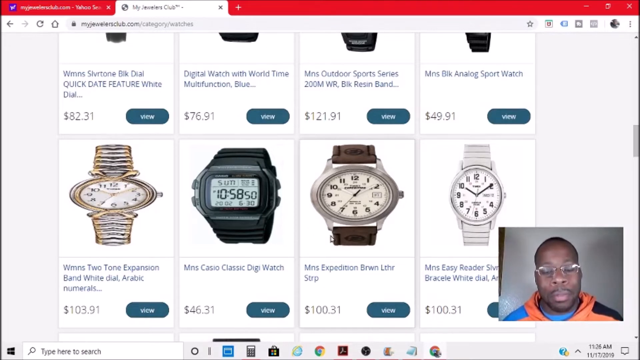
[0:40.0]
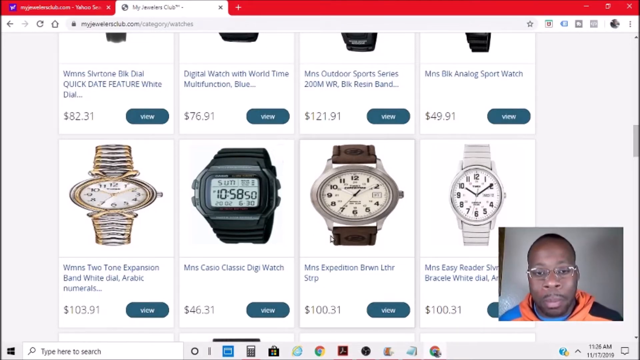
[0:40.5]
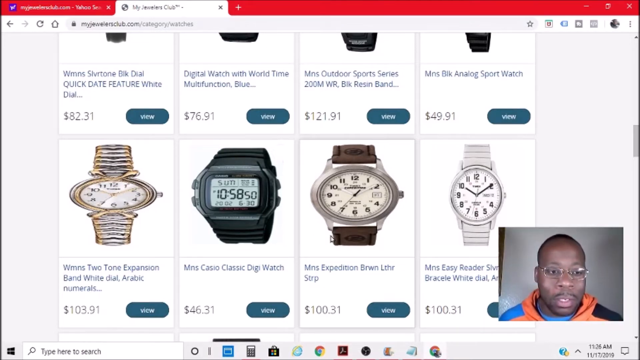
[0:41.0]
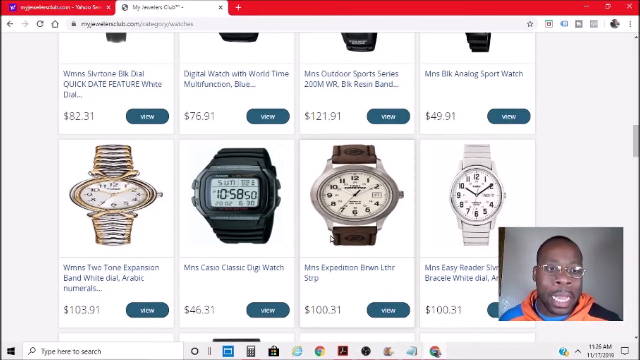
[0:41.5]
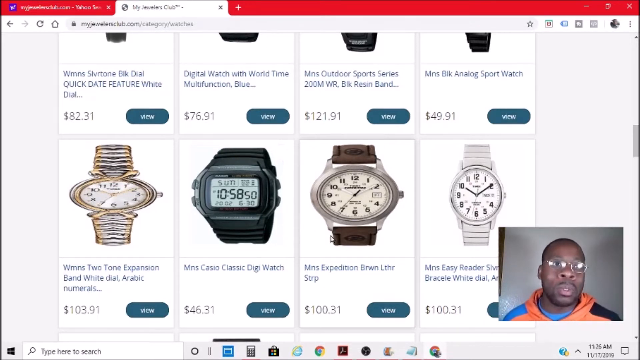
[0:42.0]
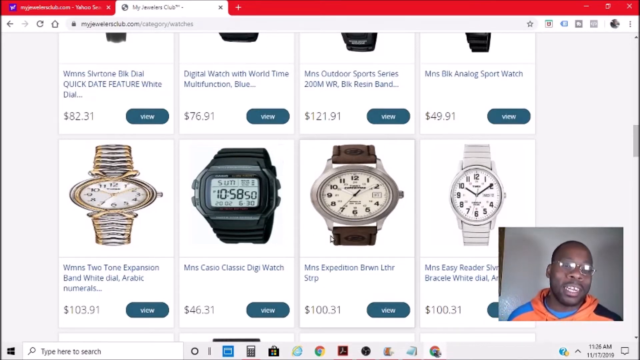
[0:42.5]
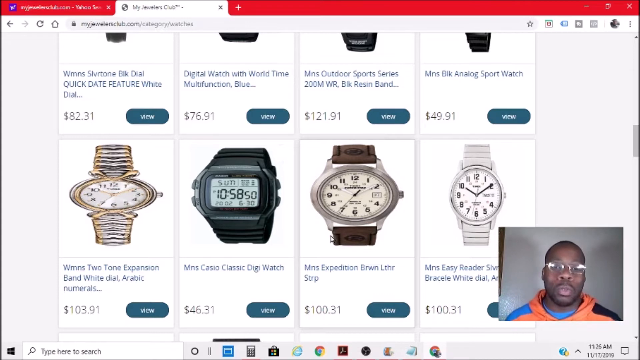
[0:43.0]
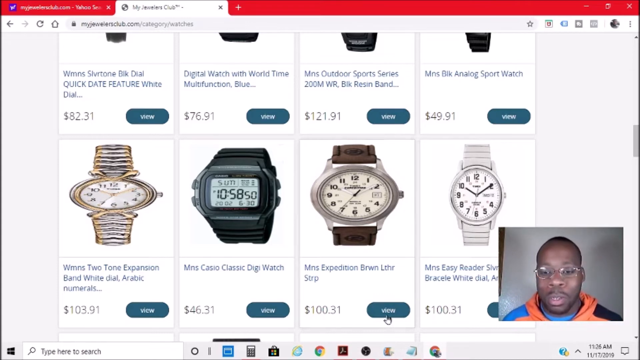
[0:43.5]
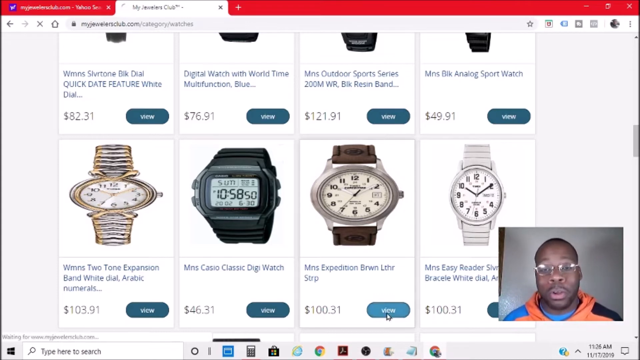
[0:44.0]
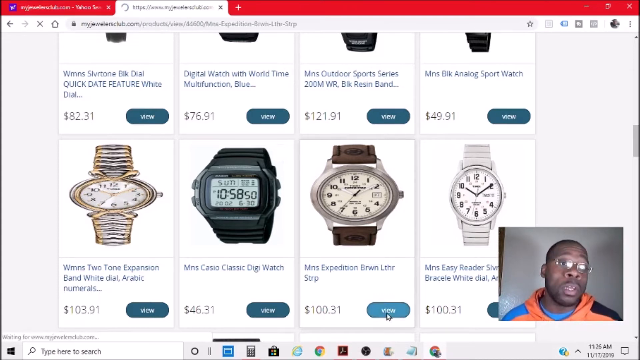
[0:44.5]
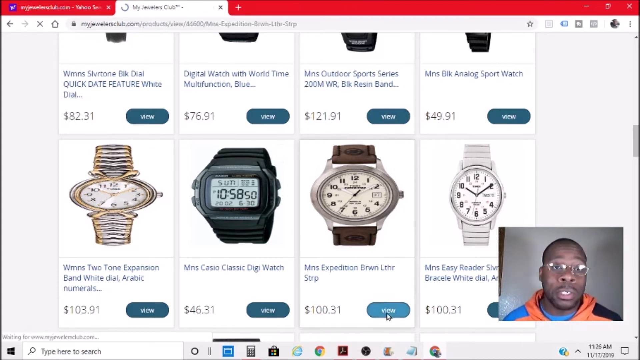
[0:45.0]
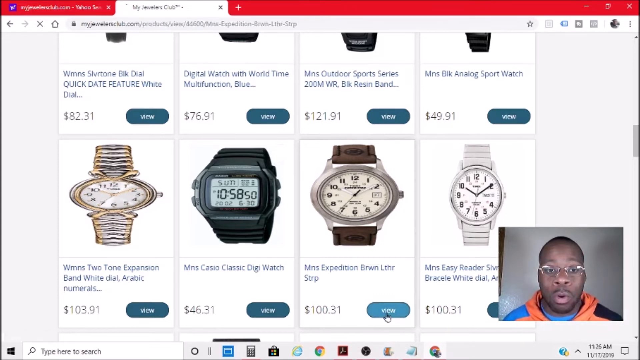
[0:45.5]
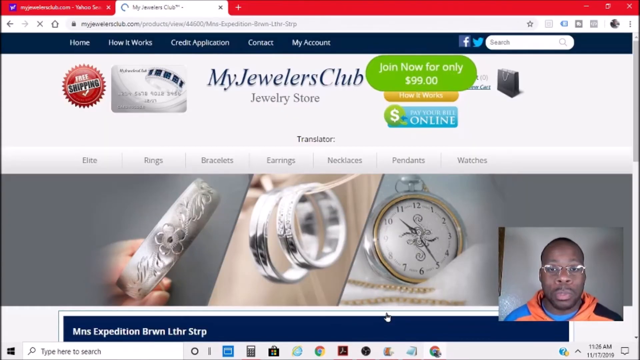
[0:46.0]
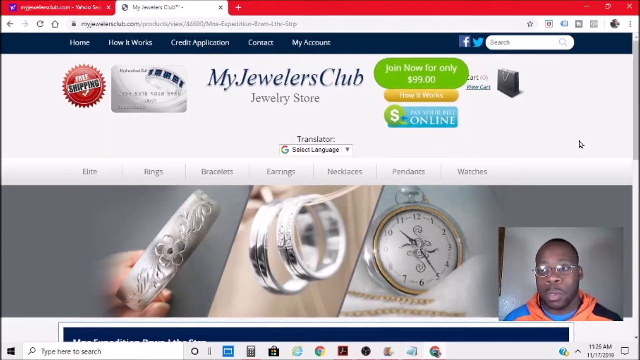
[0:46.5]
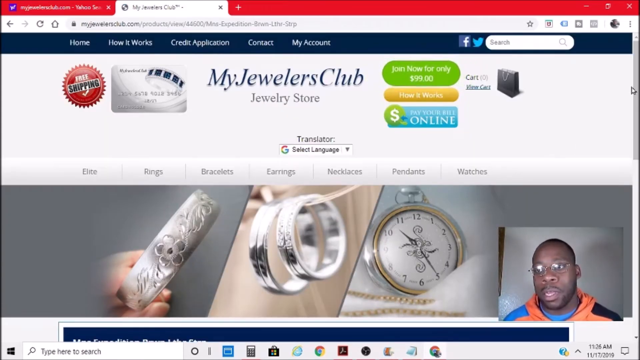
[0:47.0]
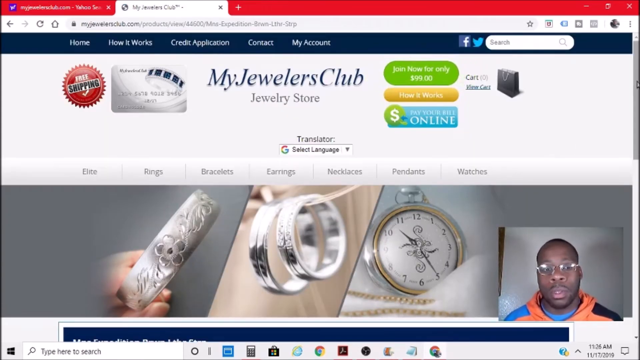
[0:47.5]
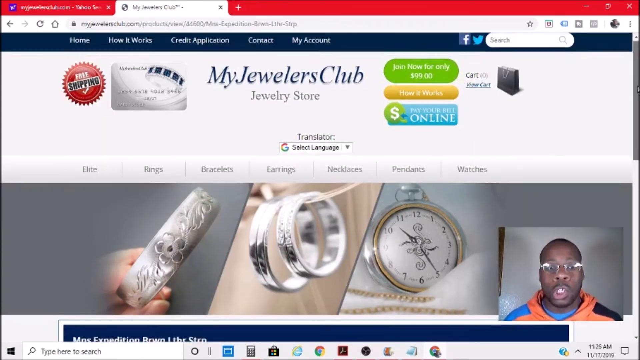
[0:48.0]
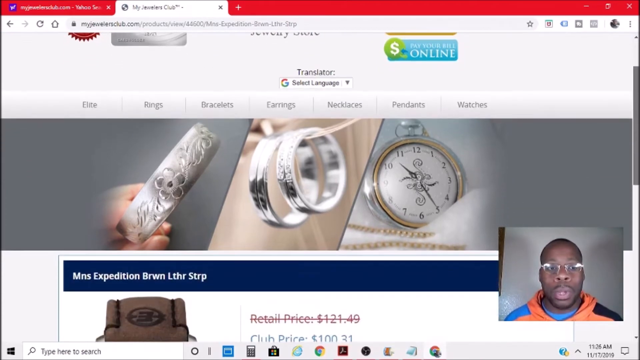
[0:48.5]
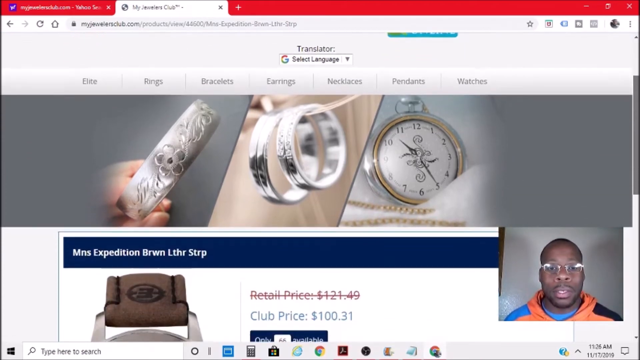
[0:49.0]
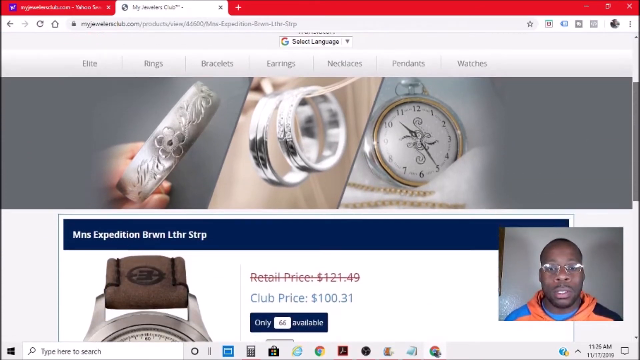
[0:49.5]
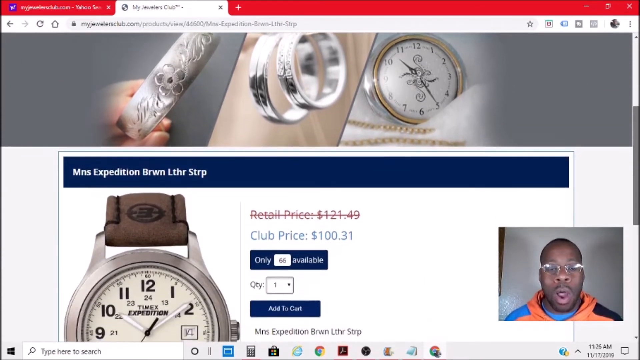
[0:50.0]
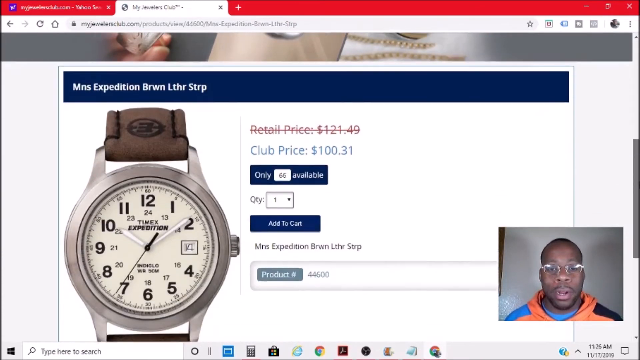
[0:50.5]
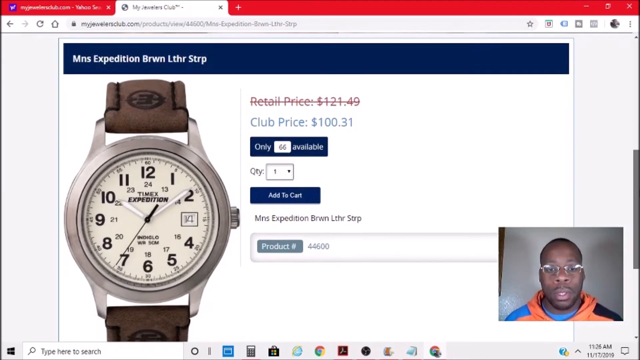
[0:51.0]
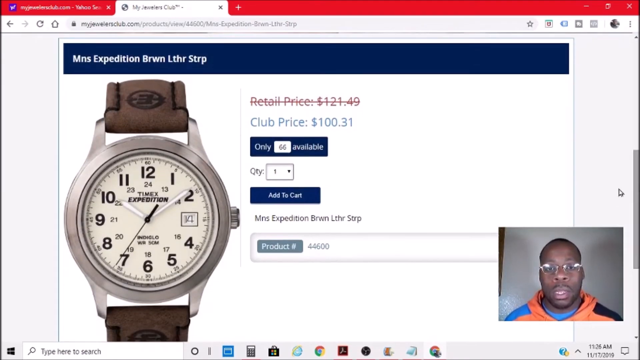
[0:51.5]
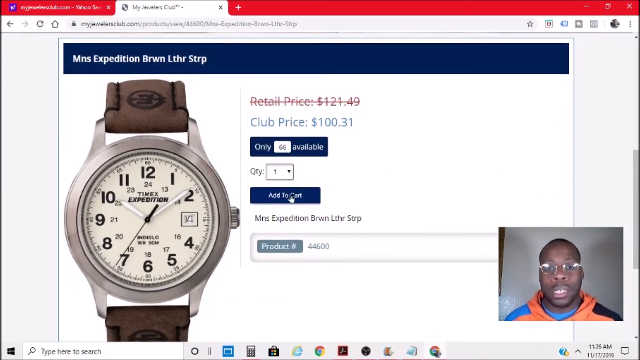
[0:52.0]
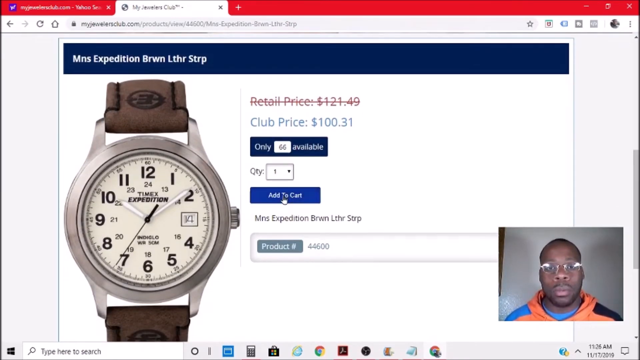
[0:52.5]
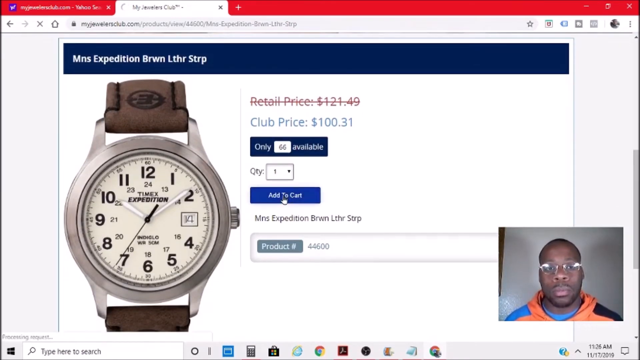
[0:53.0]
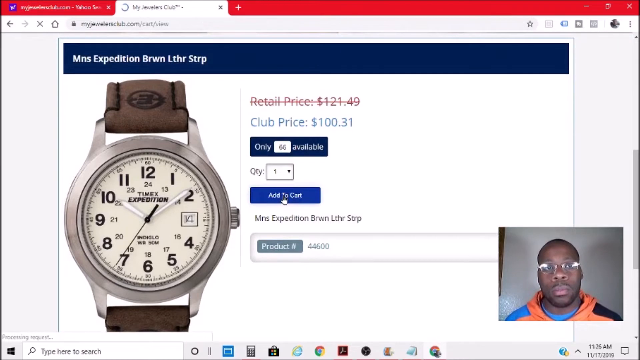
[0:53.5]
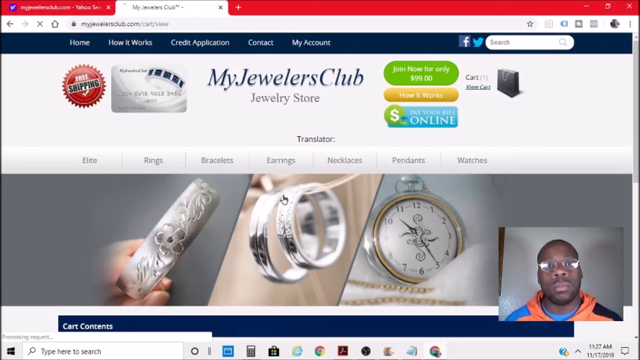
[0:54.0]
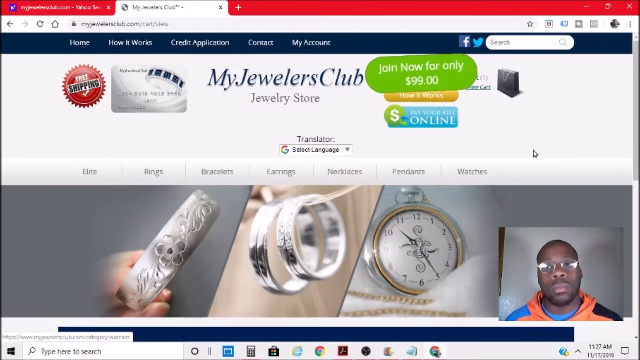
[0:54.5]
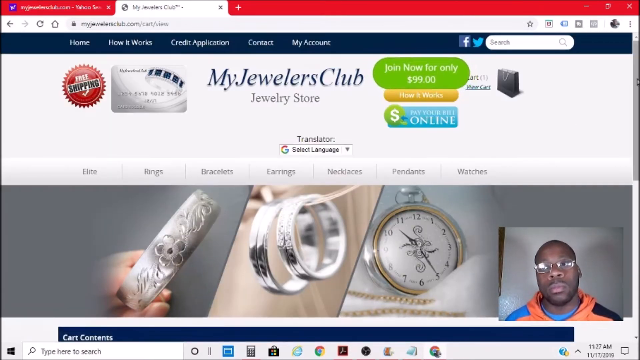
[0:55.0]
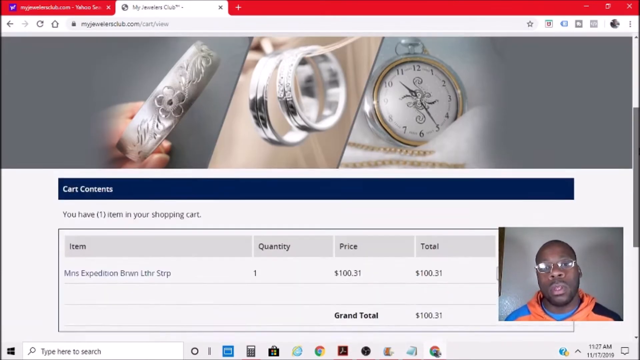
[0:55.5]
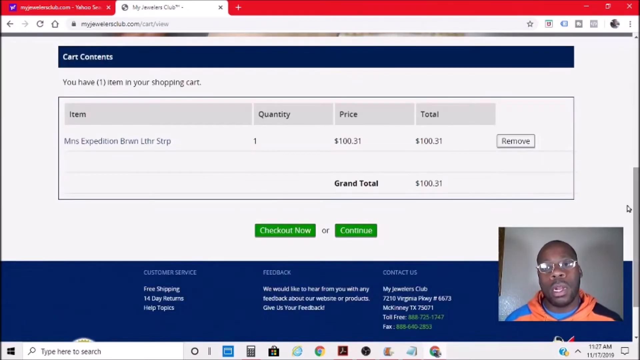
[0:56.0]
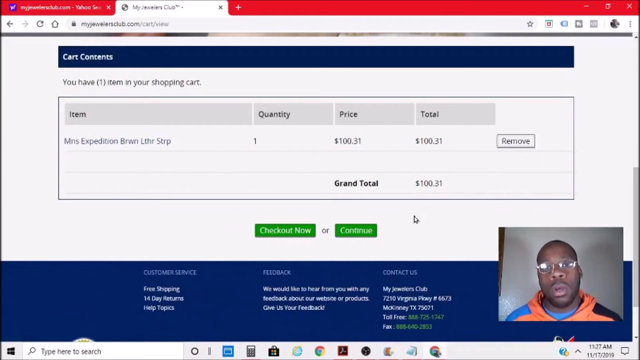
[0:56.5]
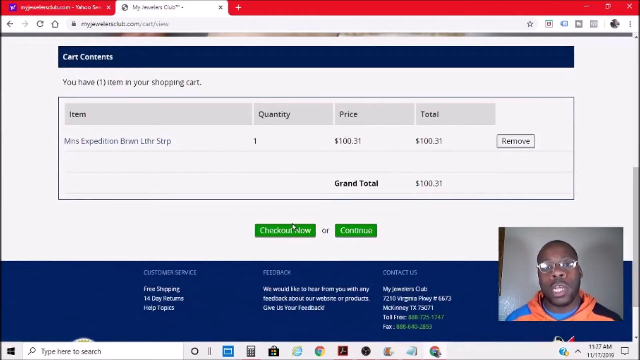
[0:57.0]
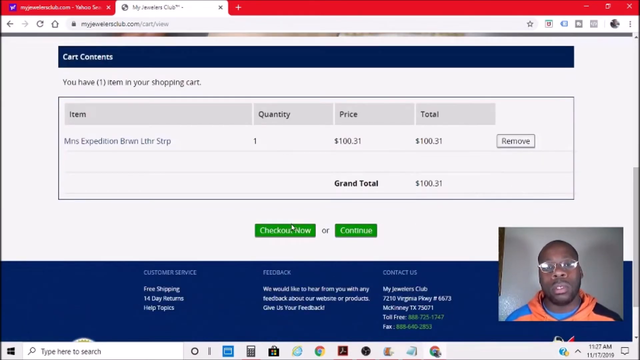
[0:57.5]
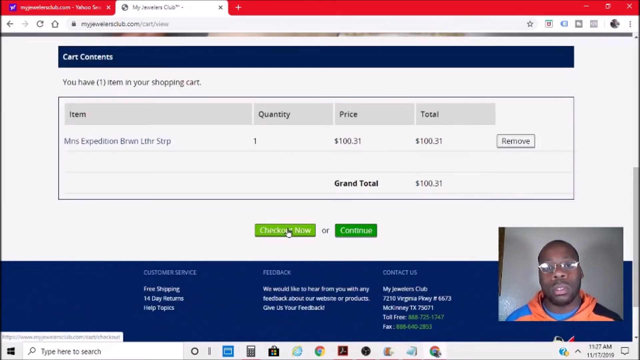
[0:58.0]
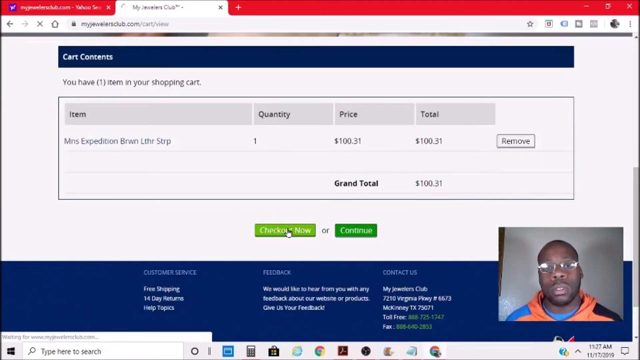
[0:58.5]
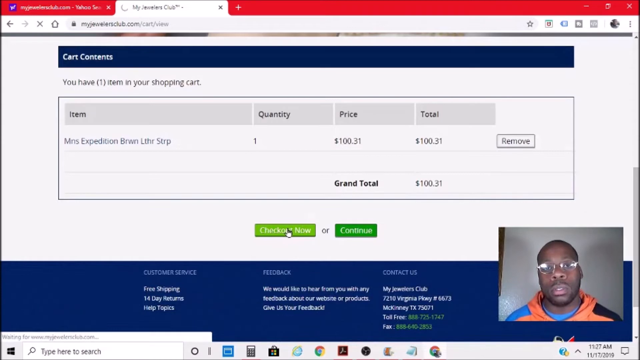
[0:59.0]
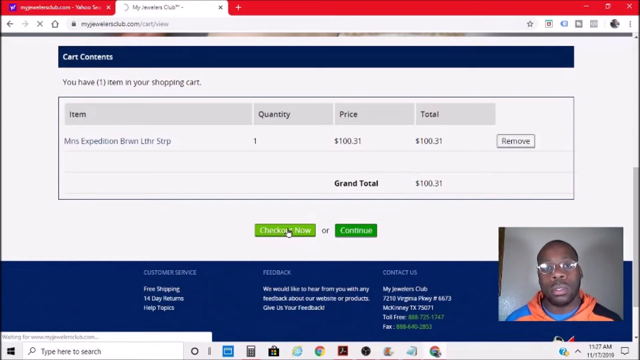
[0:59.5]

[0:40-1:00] Someone works the My Jewelry Club website, scrolling down to the bottom of the page, coming upon a watch and checking its price. They click on a green box and several watches appear. A black man with glasses and an orange sweatshirt speaks in the lower right-hand corner; at times he leans forward and moves his head back and forth. The chosen watch is added to the cart and checkout begins. The screen indicates the watch is on sale, and an option to join the jewelry club for $99 per year appears in a highlighted green bar.